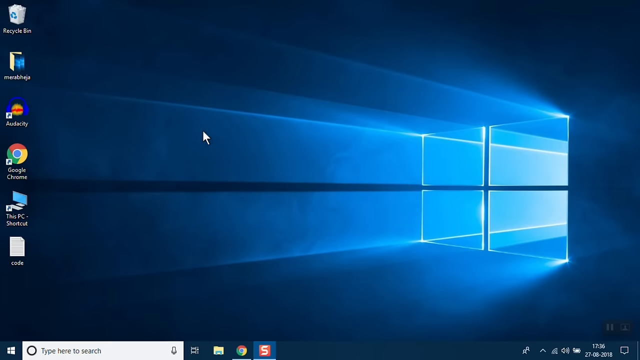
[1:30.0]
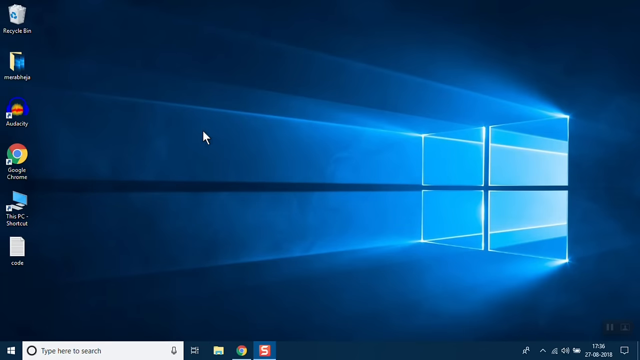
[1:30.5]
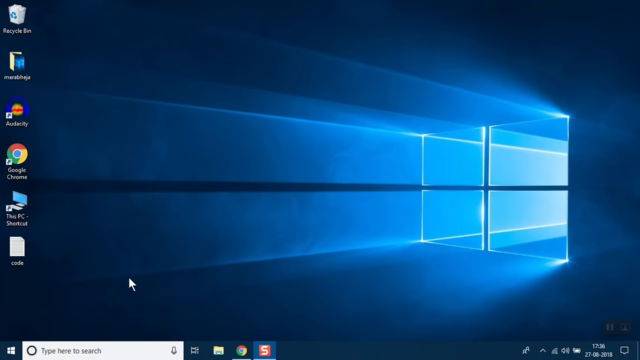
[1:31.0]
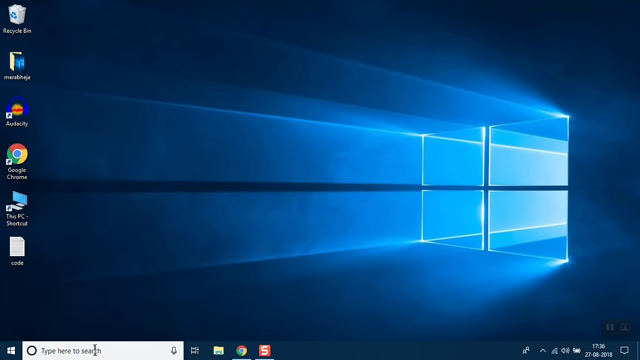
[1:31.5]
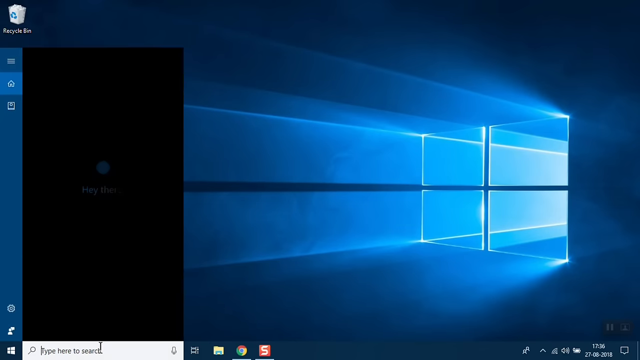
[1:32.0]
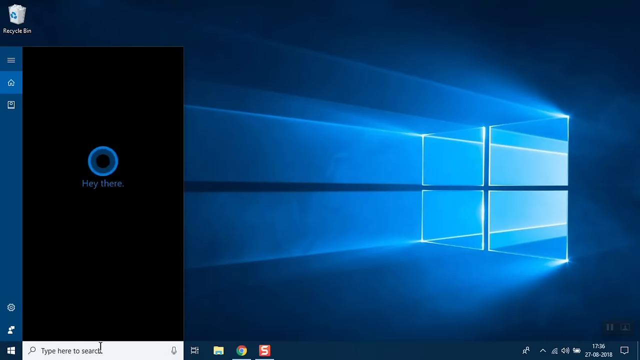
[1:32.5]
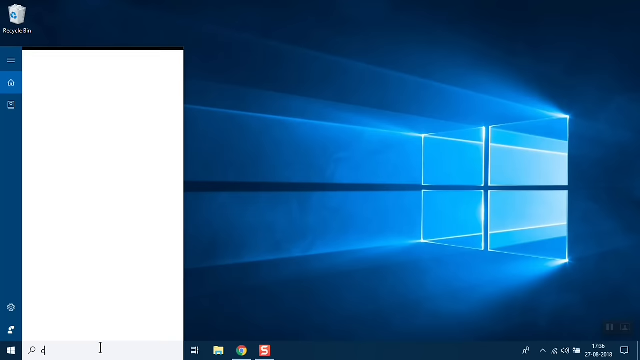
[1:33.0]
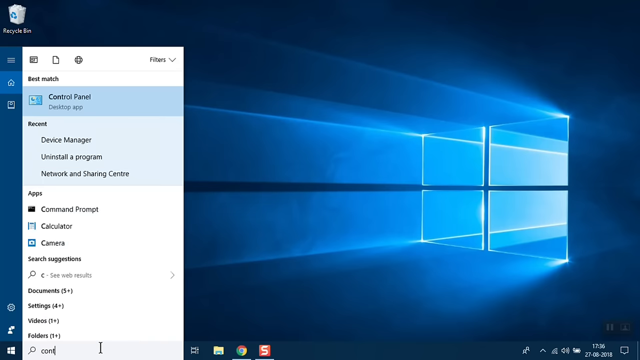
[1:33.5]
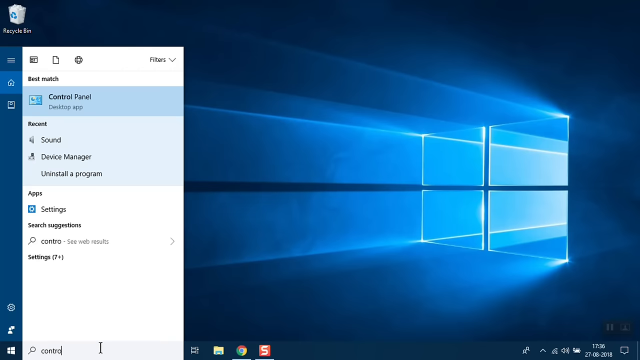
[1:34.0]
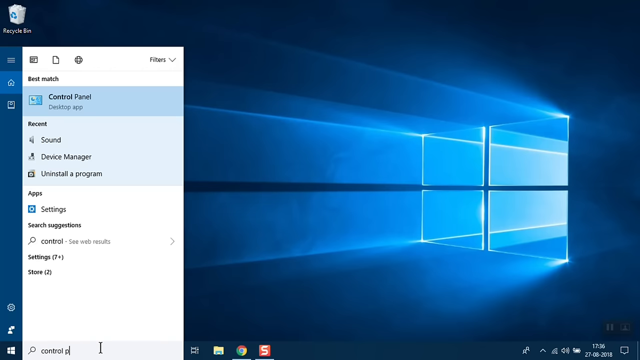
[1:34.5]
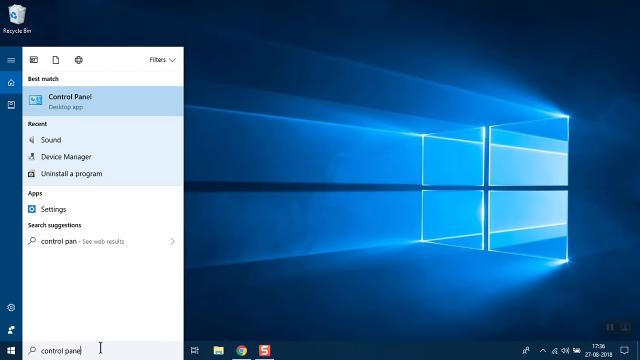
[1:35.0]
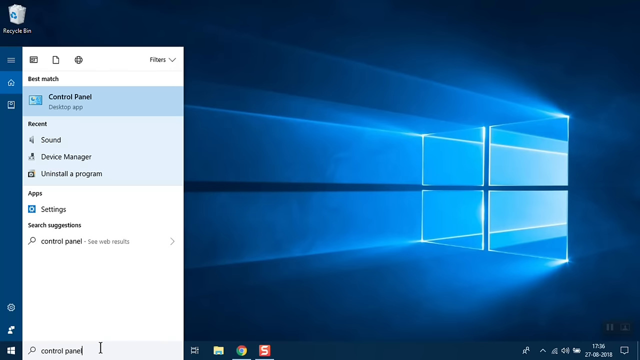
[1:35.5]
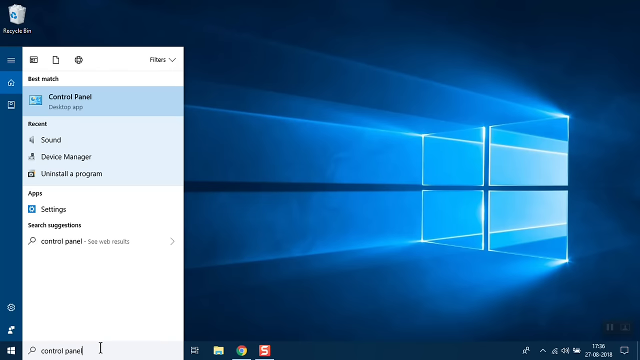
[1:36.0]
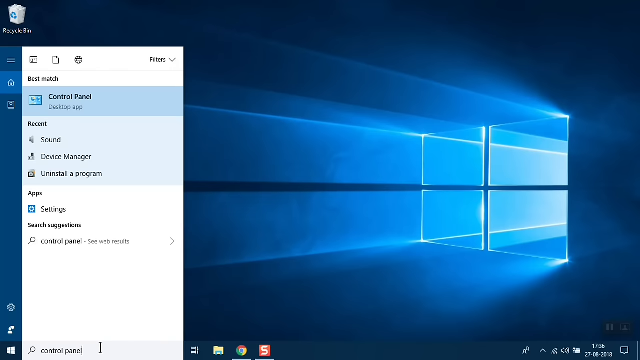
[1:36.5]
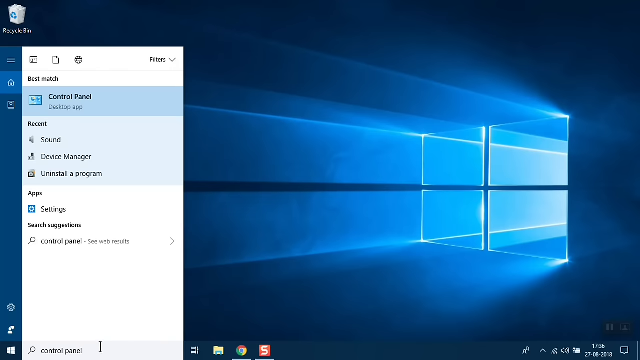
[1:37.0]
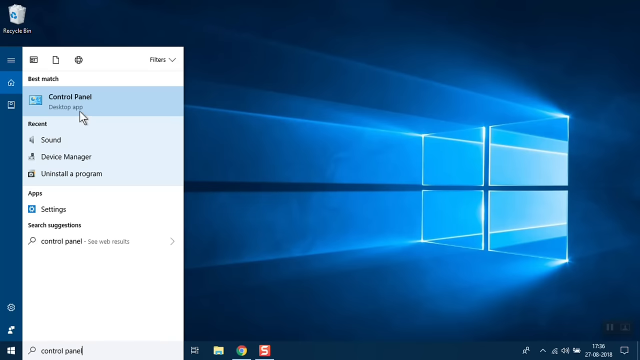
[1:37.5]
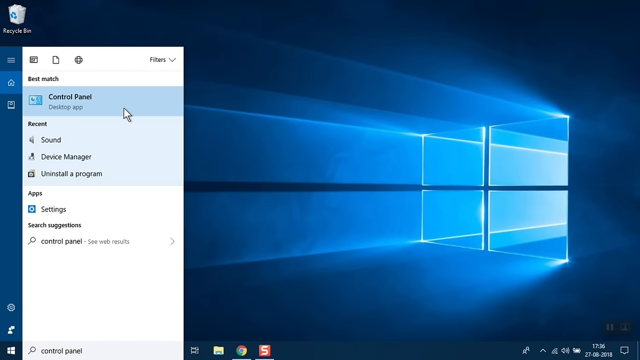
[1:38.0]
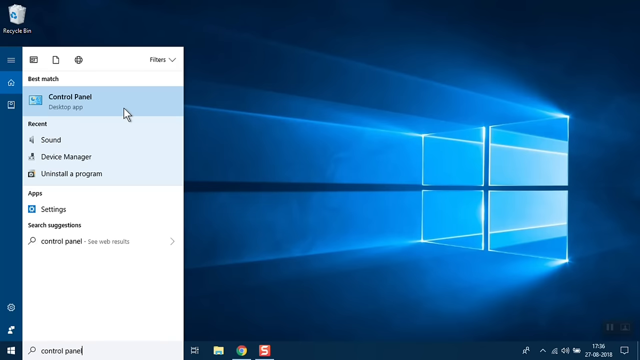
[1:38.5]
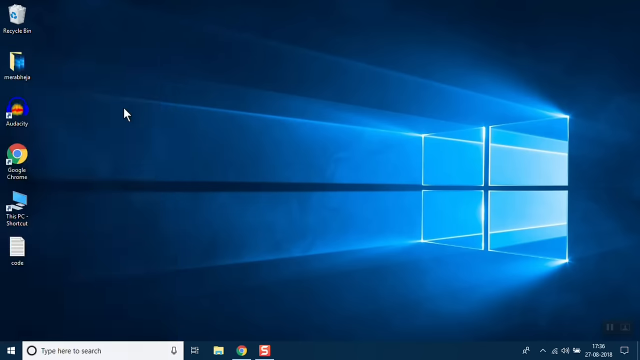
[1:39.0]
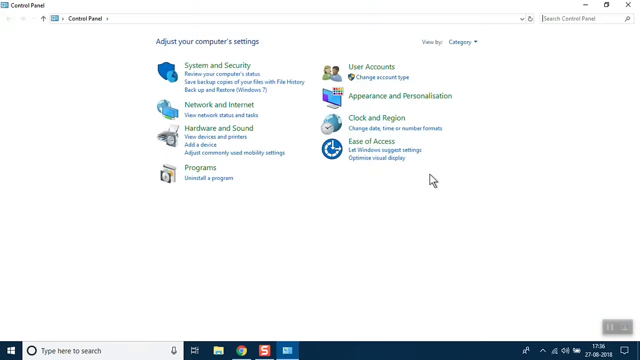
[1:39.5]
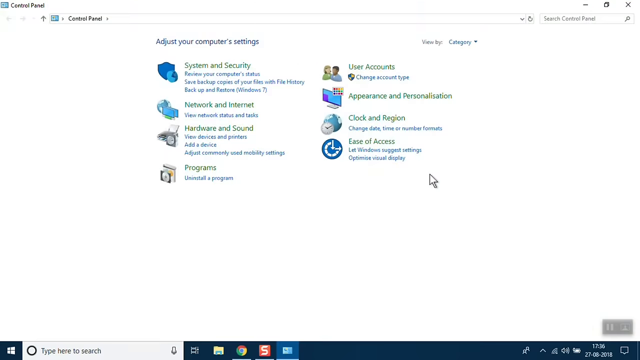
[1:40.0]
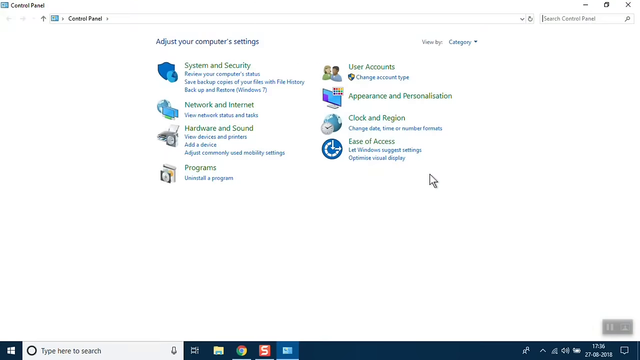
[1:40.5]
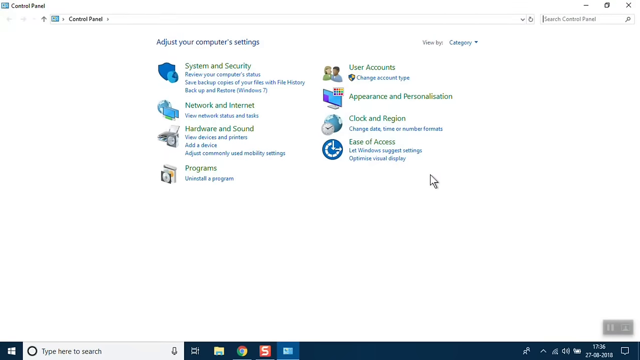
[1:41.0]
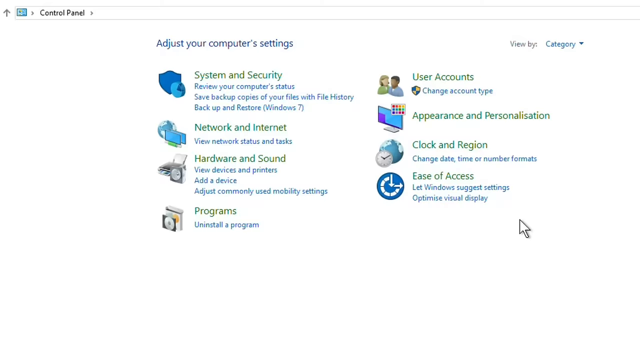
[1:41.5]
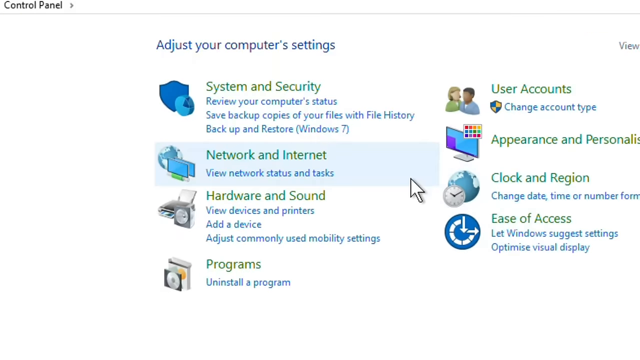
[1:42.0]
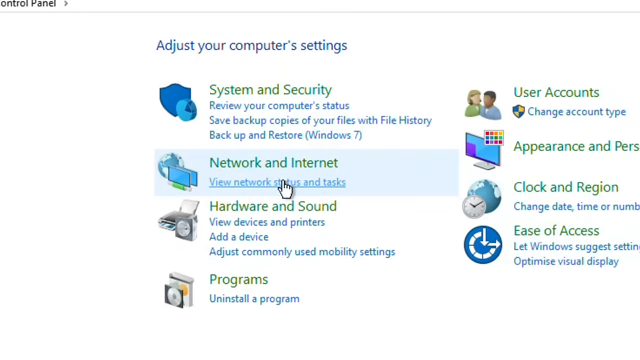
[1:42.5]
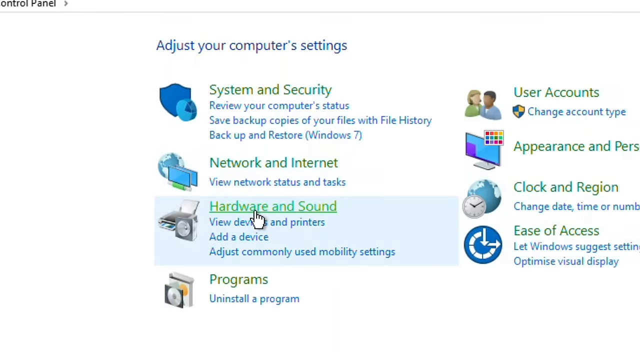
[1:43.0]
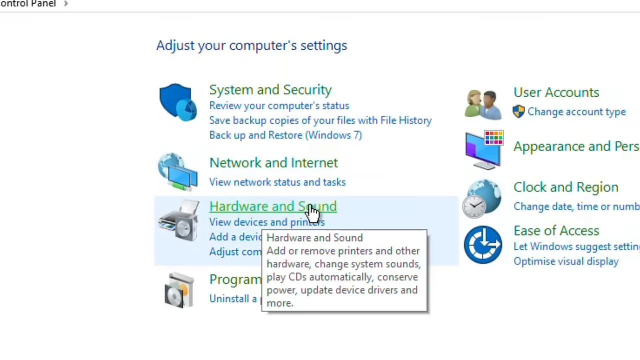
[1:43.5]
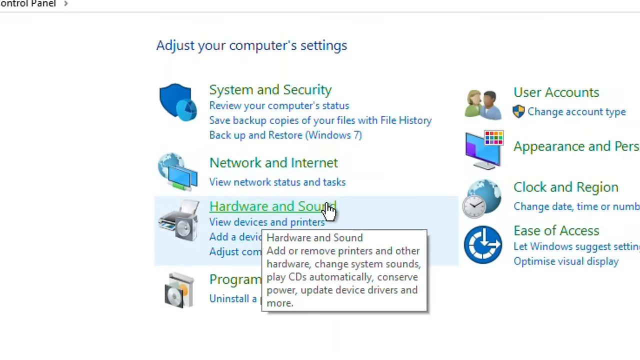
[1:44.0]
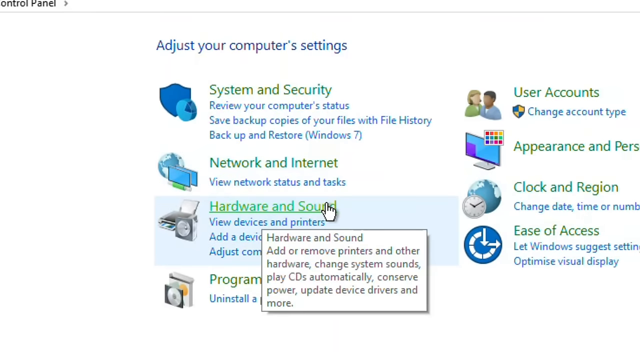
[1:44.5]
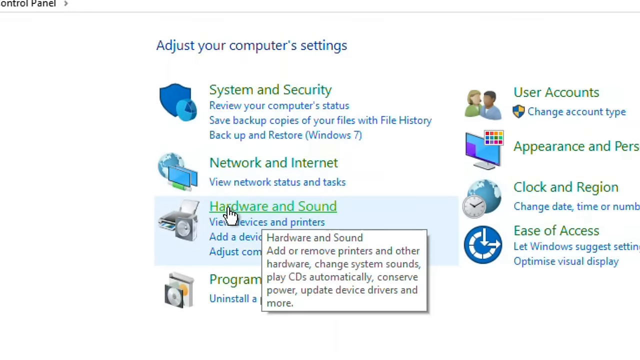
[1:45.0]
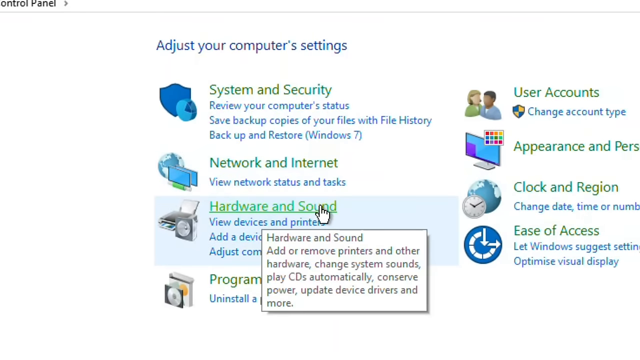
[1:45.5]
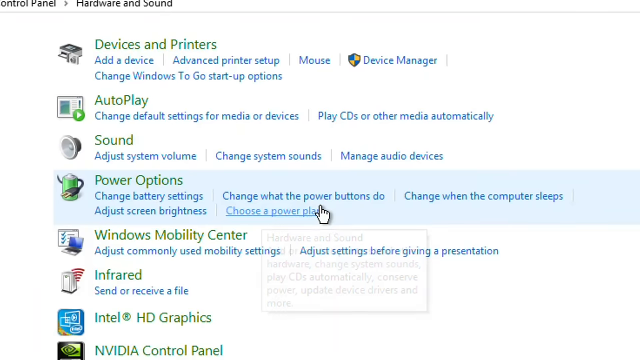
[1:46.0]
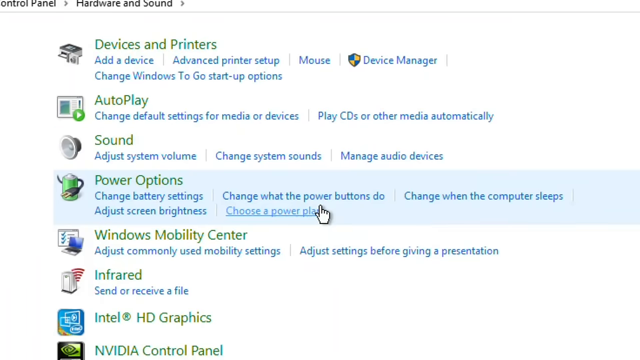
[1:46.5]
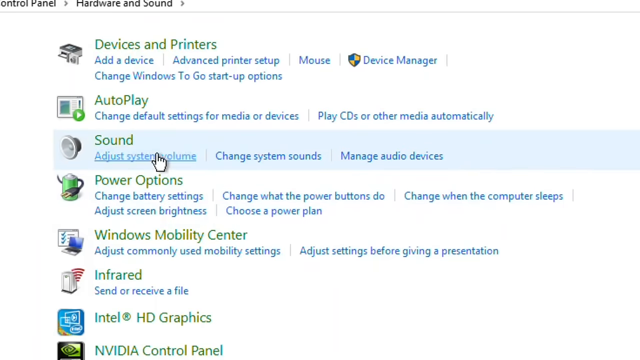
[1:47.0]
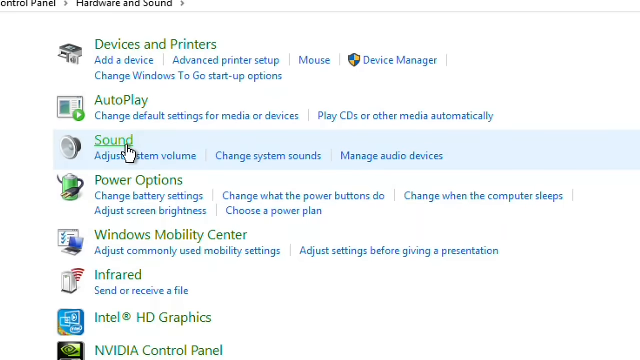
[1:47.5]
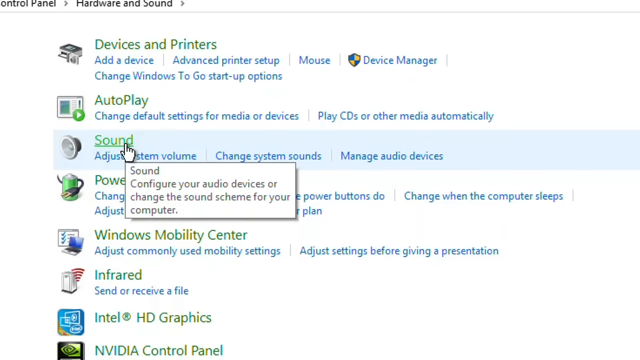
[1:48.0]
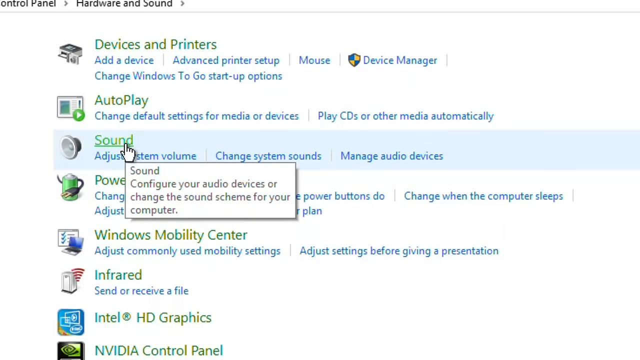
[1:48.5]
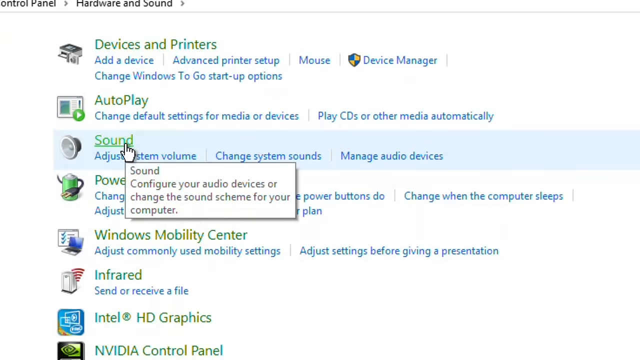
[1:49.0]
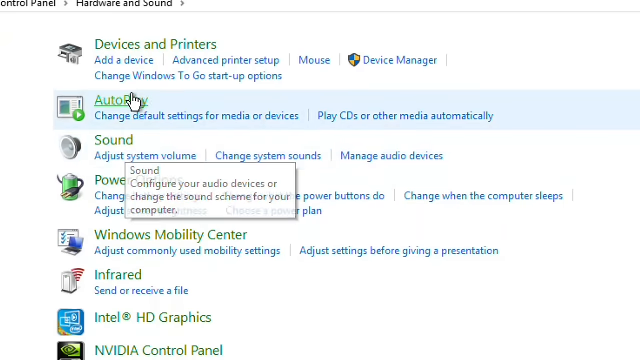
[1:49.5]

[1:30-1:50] On the original screen, the cursor sort of rests in the middle for a second or so, then zips off toward the lower left corner and clicks something. A black, portrait rectangular window opens on the left of the screen. In the middle of it is kind of a blue circle, and below that, in small blue text, it says "hey there". The person clicks the blue circle, which shows a little motion. The window, the same size, then has a white background with a number of entries on the left: at the very top left it says "Best Match", beneath it "Control Panel", then "recent", and several other entries in about four sections with a couple of entries each. The cursor goes up and clicks Control Panel, which briefly turns to a blue background. The entire screen then fills with a mostly white Control Panel window. Very small in the upper left corner is a rectangular blue icon with the words "control panel" next to it, and at the top center it says "Adjust your computer's settings". Below are two columns of four choices each, each with an icon on the left, a green header, green text and some blue text beneath. The view zooms in a little, and the cursor, now shaped like a hand, rests above "Hardware and sound"; the words become underlined and a white three-dimensional box pops out saying "Hardware and sound" with four and a half lines of text explaining what it does. The person presumably clicks it, as the view jumps quickly to another screen with a similar structure but a single column of six or seven entries. The hand cursor hovers over "Sound", which has kind of a microphone icon to its left, and a little box comes out explaining what sound does.